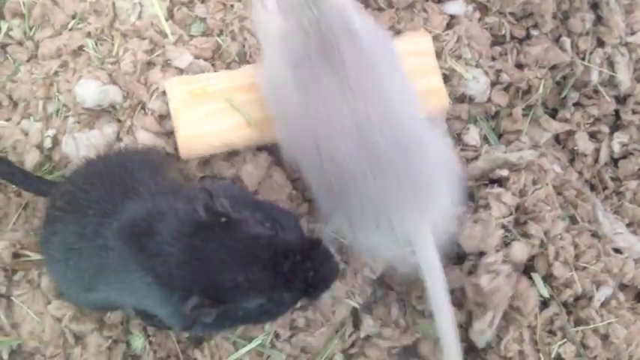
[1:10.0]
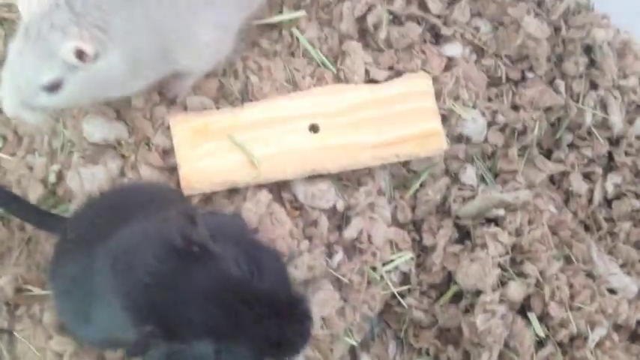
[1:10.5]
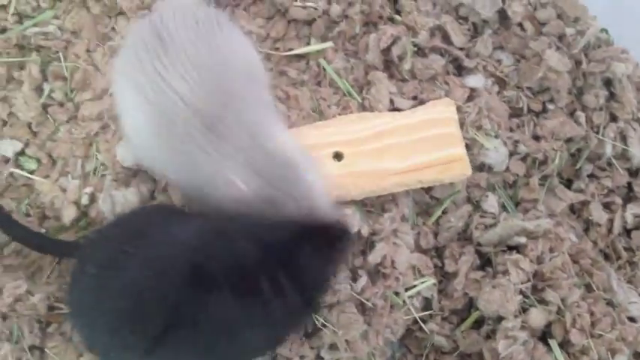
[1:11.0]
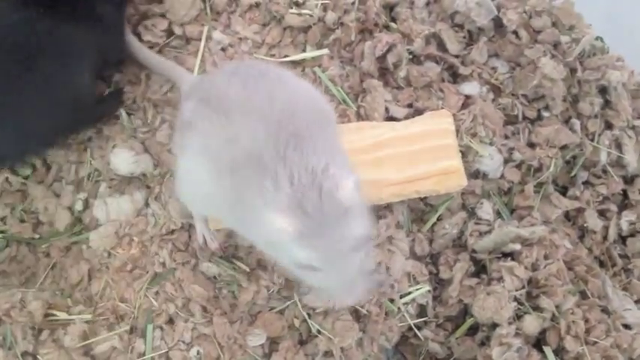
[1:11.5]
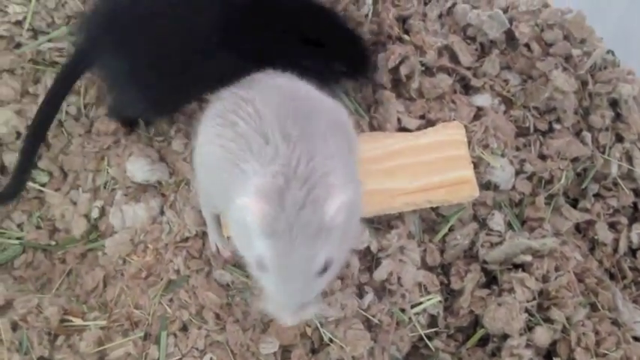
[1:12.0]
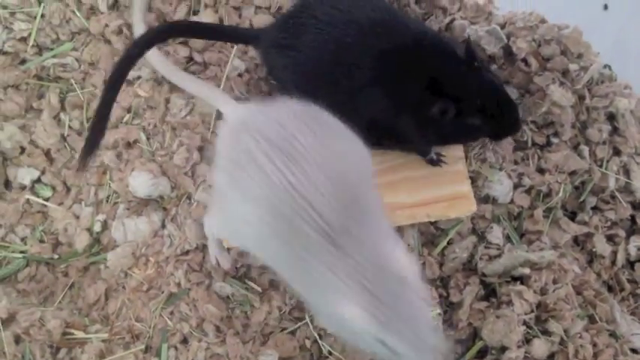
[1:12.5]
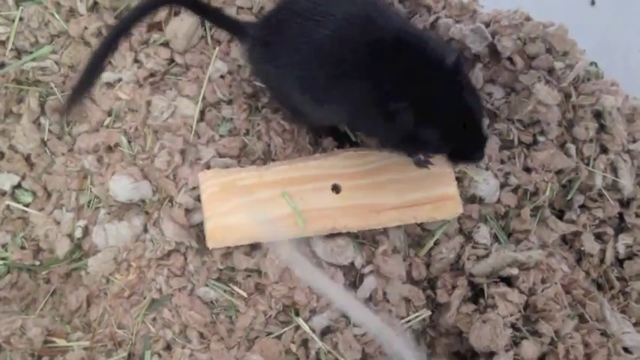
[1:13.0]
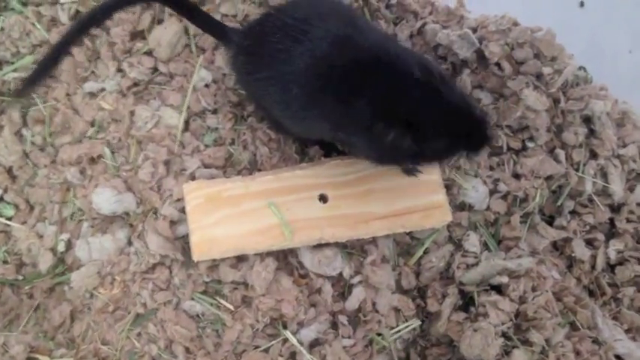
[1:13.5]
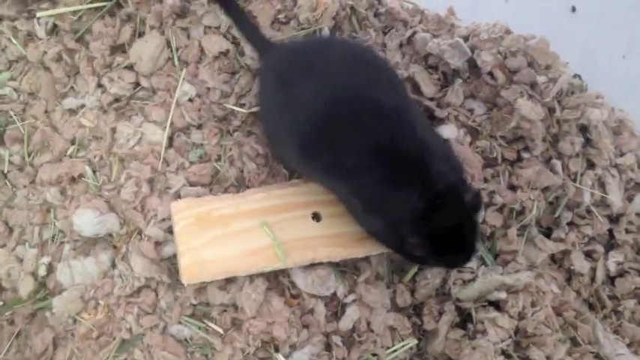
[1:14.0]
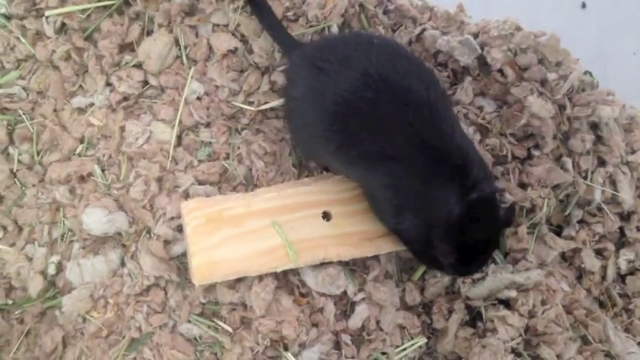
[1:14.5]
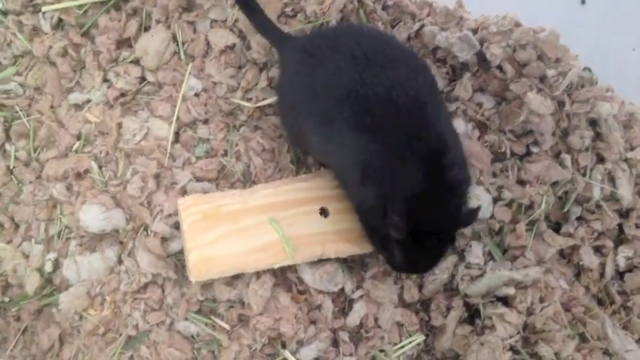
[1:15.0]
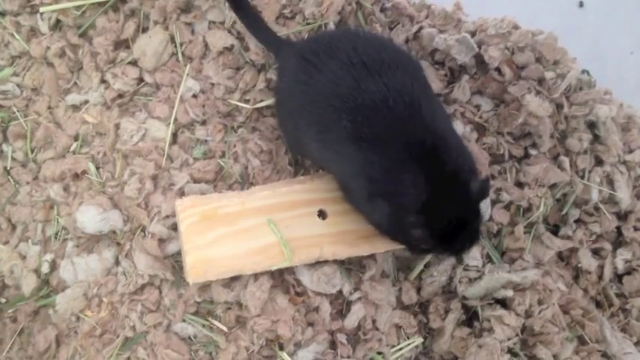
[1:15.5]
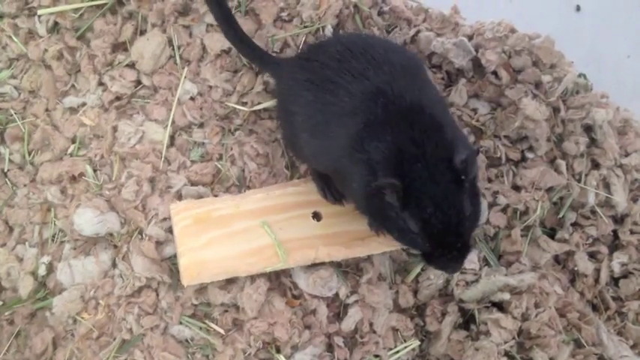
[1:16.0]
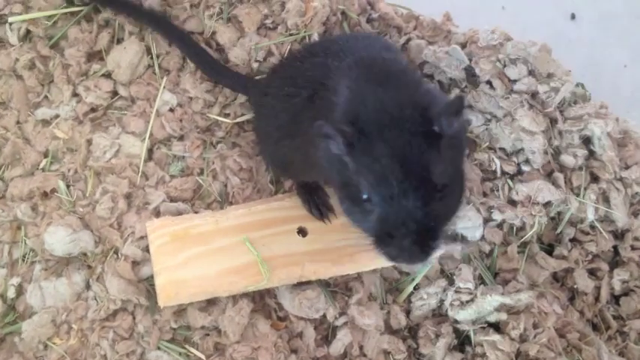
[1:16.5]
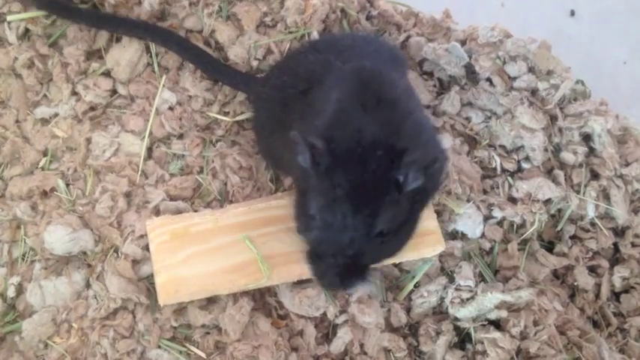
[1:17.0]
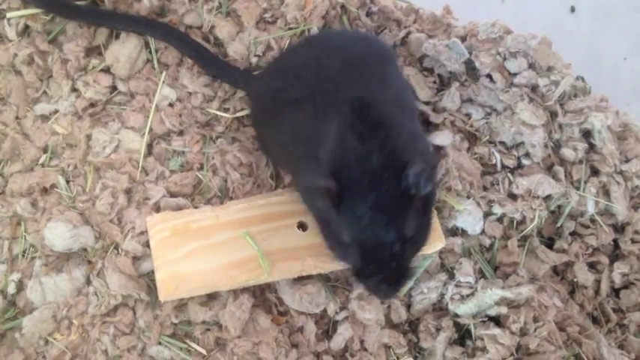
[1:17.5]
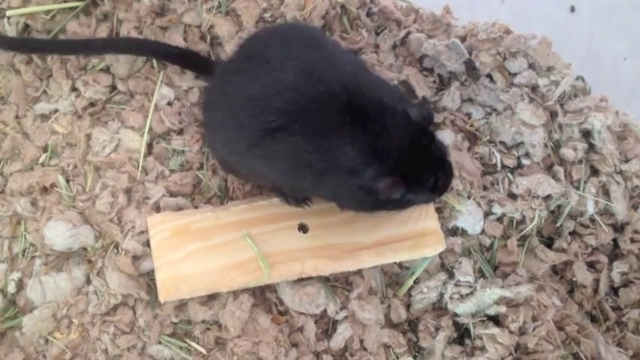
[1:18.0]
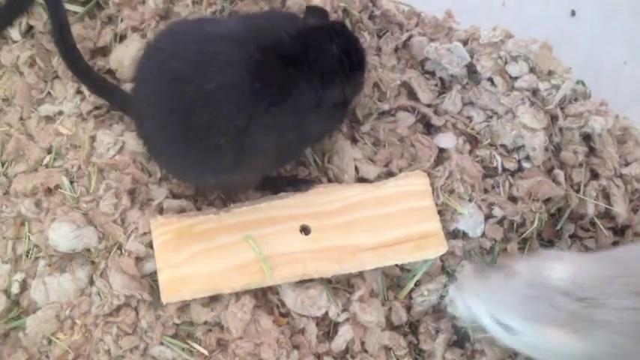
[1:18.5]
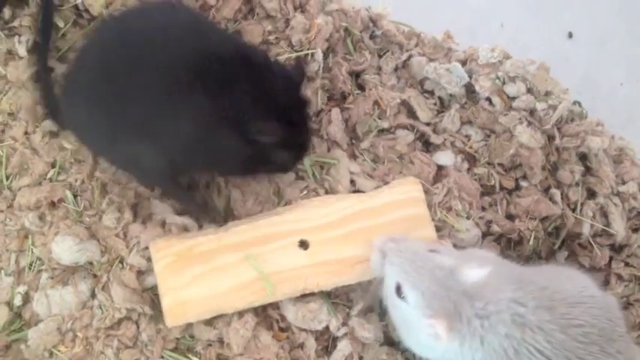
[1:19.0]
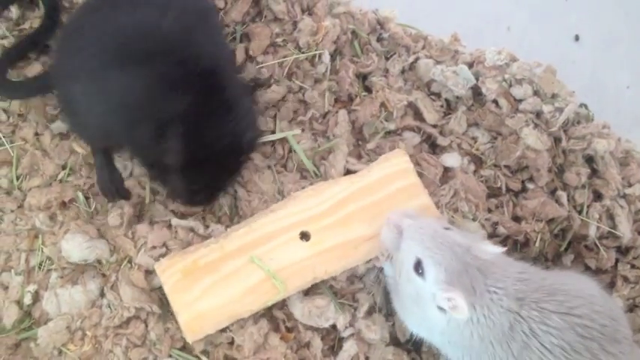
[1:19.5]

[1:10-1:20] As the grey gerbil runs over the wood, it spins around, runs back over the wood and moves the black one out of its way. The black one moves to the left, runs around the grey one to the right of the screen, and stands on the top right corner of the wood. It then starts digging on the opposite side of the wood and sniffs the air. The grey one comes from the bottom right corner and starts biting into the wood, and the black gerbil steps backwards and starts to groom itself.